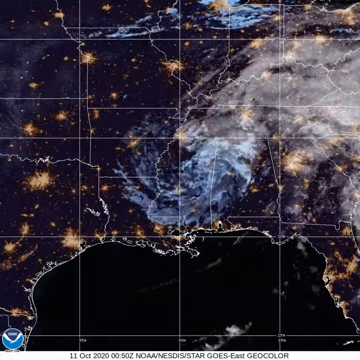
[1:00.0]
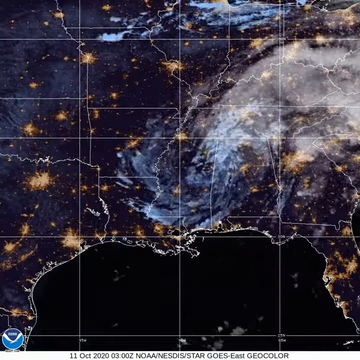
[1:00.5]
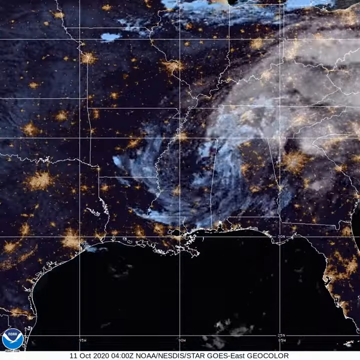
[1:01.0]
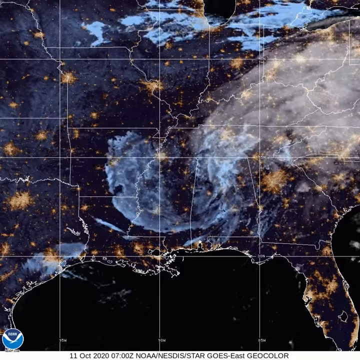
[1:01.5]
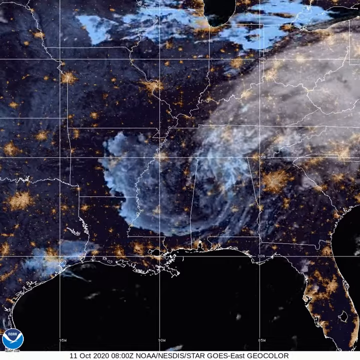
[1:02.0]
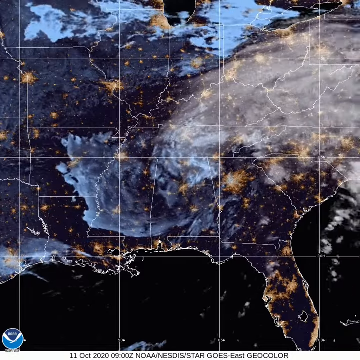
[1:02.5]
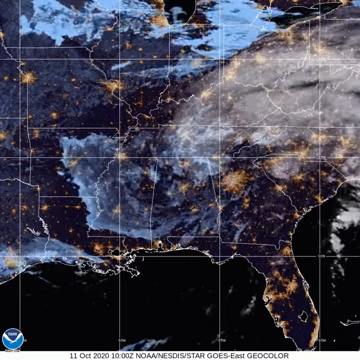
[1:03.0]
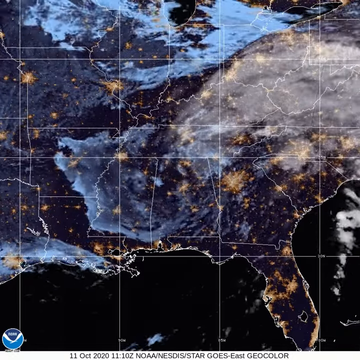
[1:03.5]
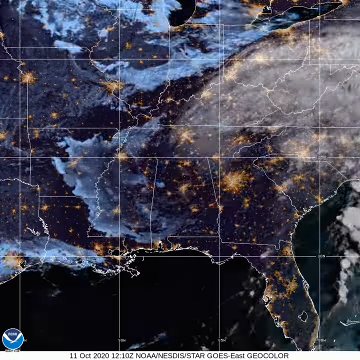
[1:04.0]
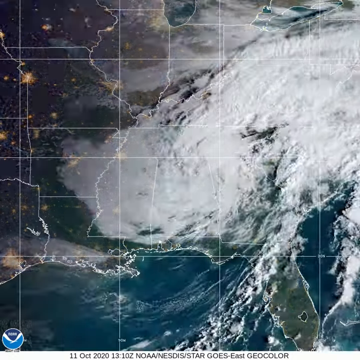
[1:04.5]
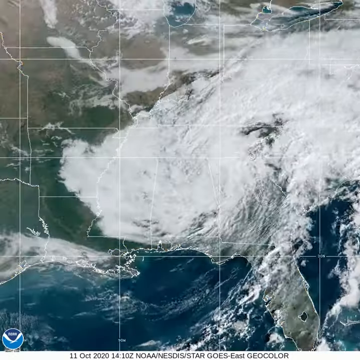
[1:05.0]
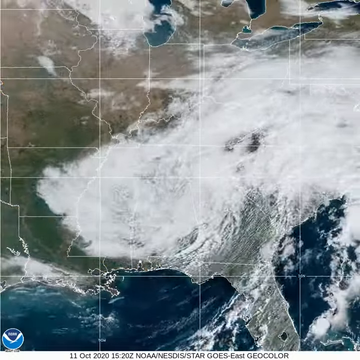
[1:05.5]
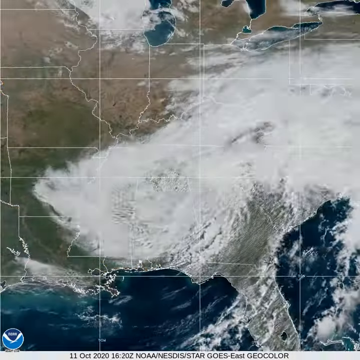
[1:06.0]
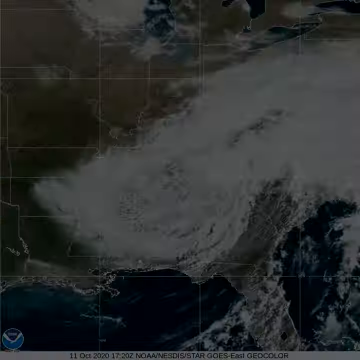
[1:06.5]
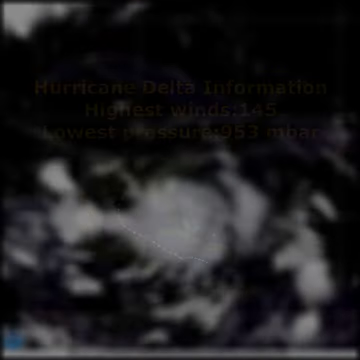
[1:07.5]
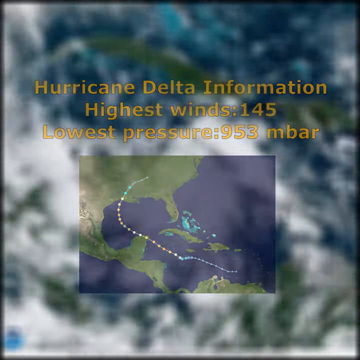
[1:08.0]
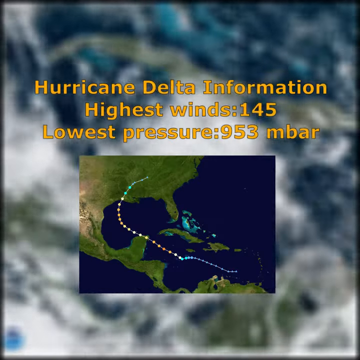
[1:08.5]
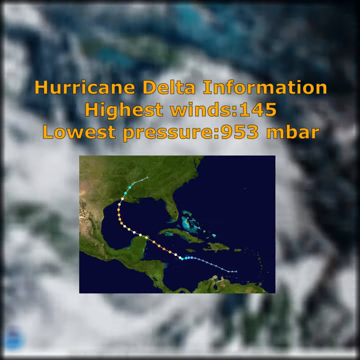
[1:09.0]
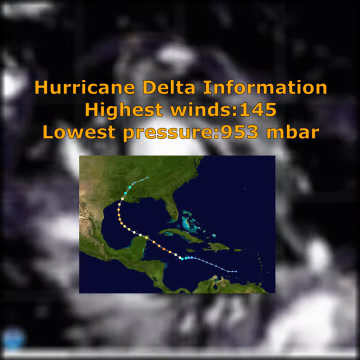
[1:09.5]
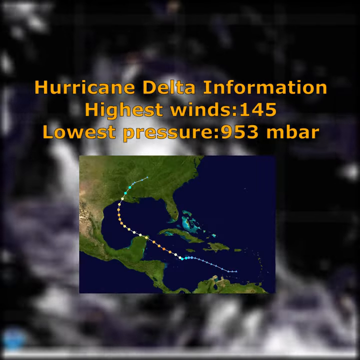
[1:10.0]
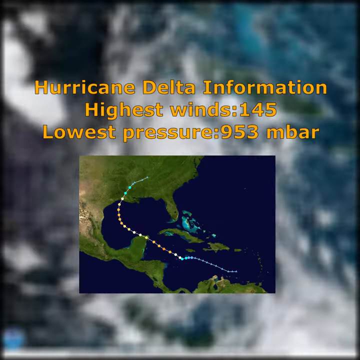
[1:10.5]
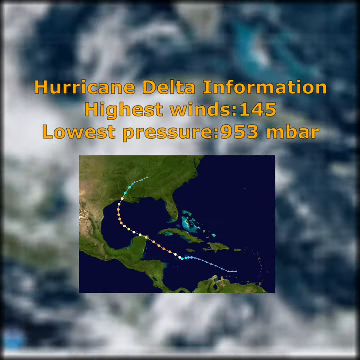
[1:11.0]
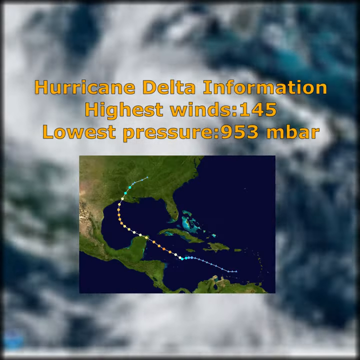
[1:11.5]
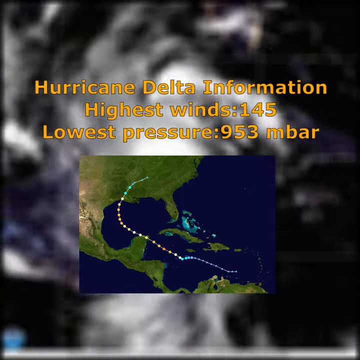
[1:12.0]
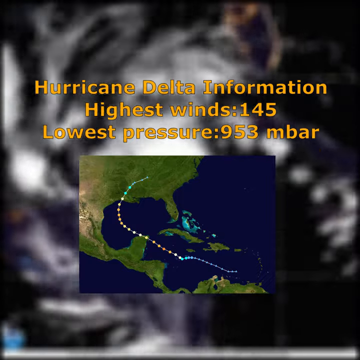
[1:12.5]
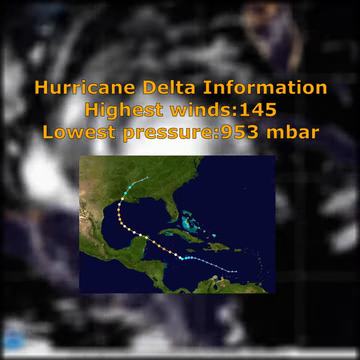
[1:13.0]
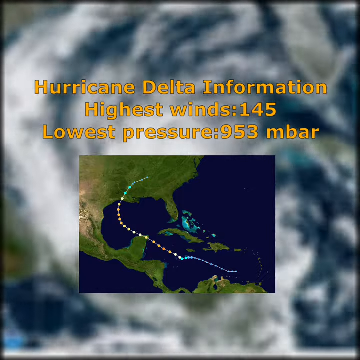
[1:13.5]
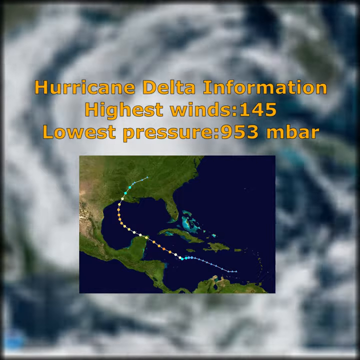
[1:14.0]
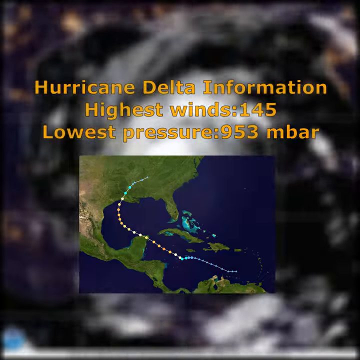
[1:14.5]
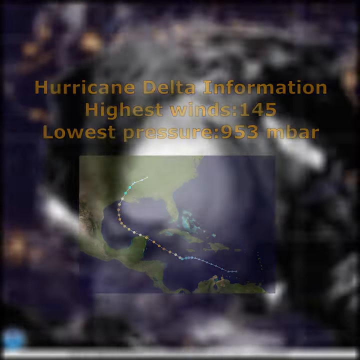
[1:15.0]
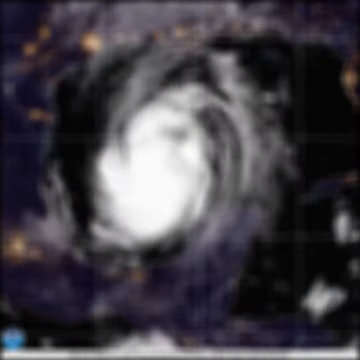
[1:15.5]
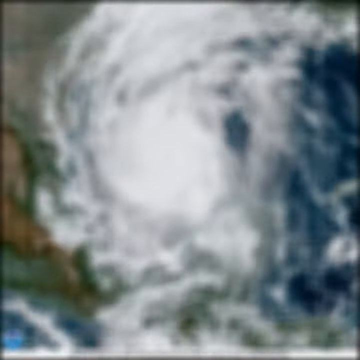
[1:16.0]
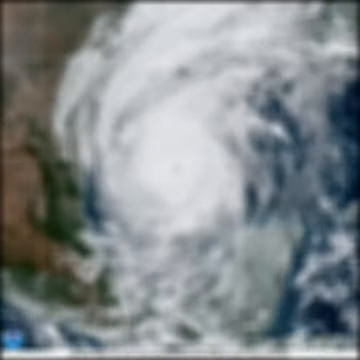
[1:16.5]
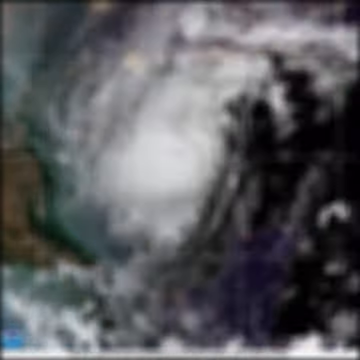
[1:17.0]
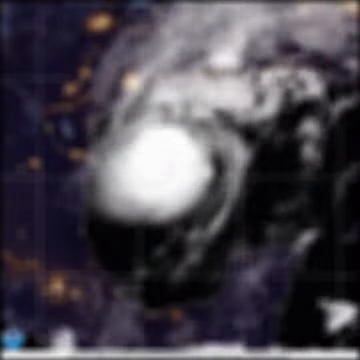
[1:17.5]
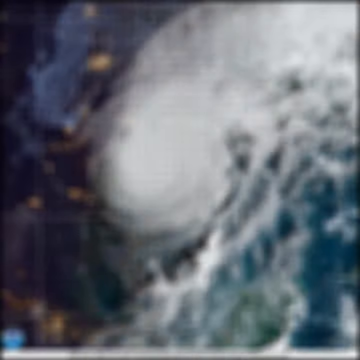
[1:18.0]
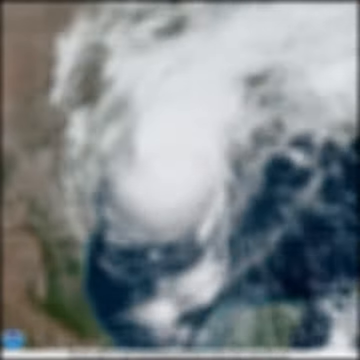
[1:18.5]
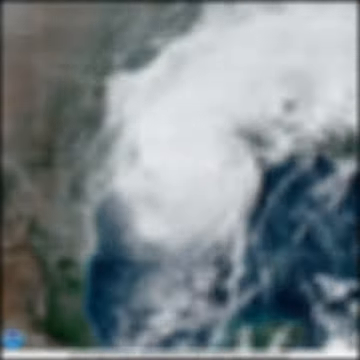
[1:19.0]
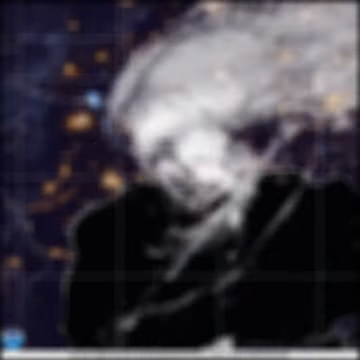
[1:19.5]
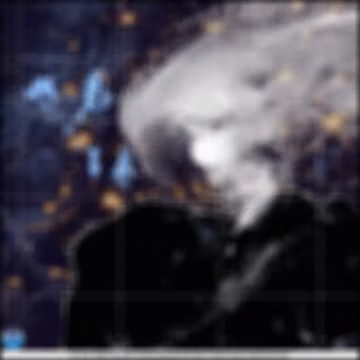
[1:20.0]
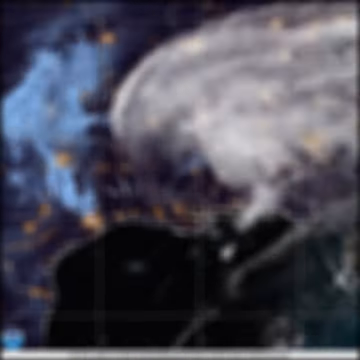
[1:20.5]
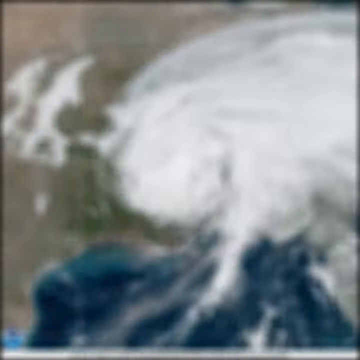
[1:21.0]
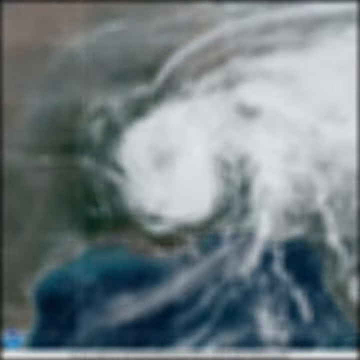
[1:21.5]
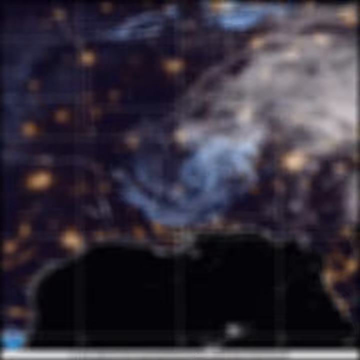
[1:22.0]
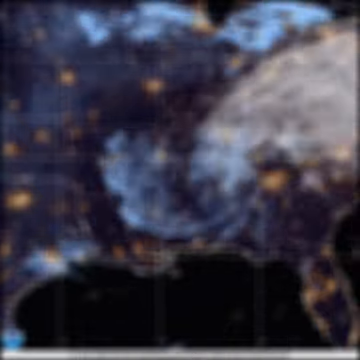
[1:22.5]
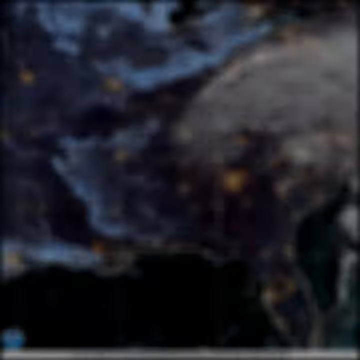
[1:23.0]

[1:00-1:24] Satellite imagery switches back and forth between nighttime and daytime views, showing the clouds of the storm dissipating over the United States and further to the northeast as the remnant is carried off by winds from the west. The video then transitions to an information page identifying it as Hurricane Delta information and listing the highest winds at 145 mph and the lowest pressure at 953 mbar. Below the words is a small inlay map showing the storm forming in the Caribbean Isles and south of Cuba, making its way up between the Isles and Mesoamerica, growing in the Gulf of Mexico and making landfall in North America. The video ends with the hurricane shown at full force making landfall, with the eye of the storm visible inside.